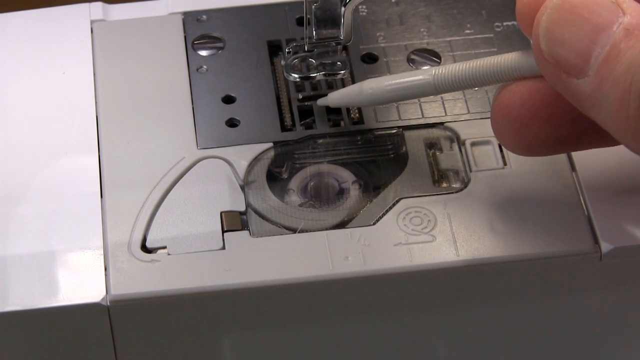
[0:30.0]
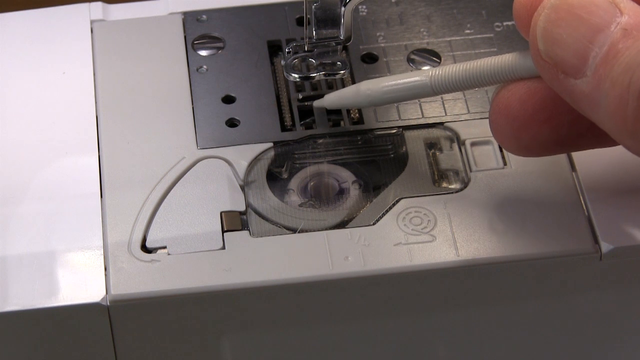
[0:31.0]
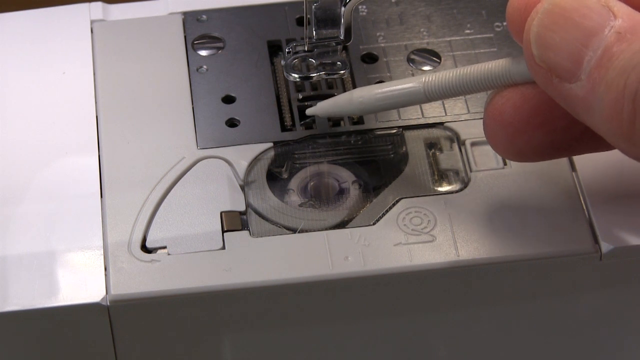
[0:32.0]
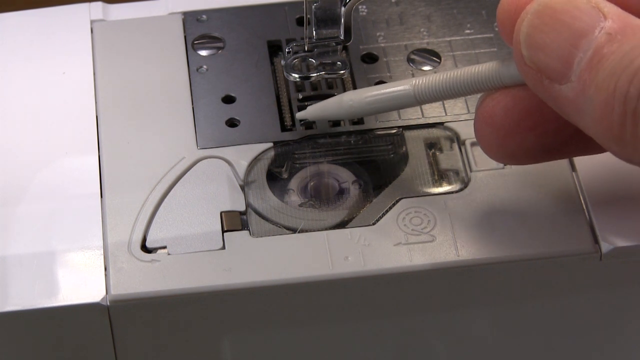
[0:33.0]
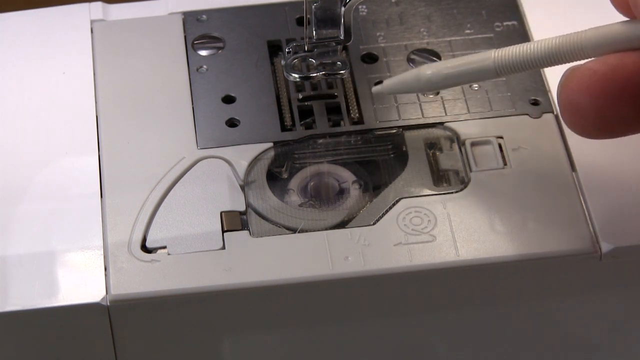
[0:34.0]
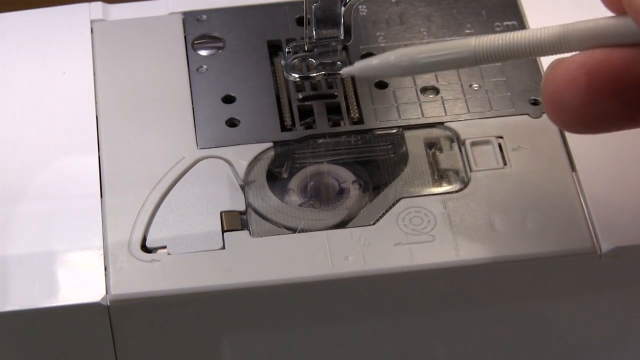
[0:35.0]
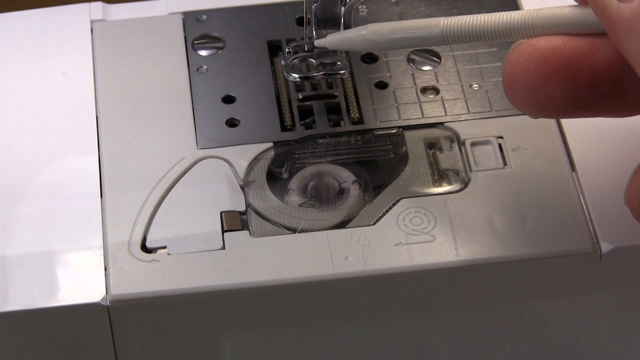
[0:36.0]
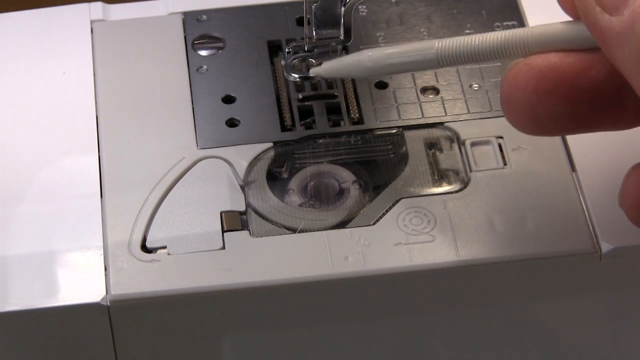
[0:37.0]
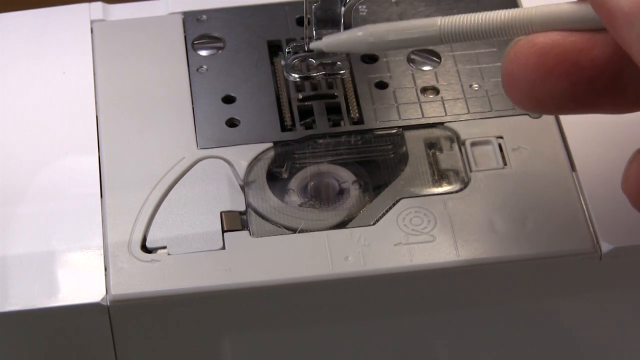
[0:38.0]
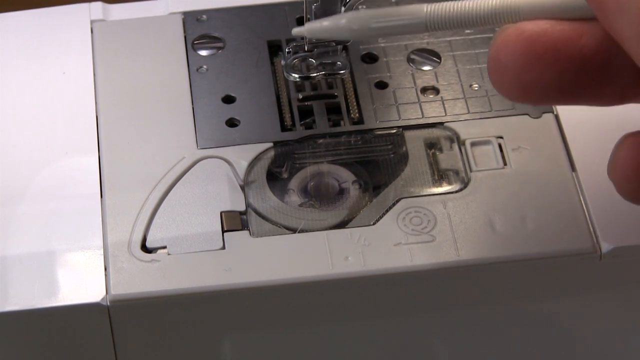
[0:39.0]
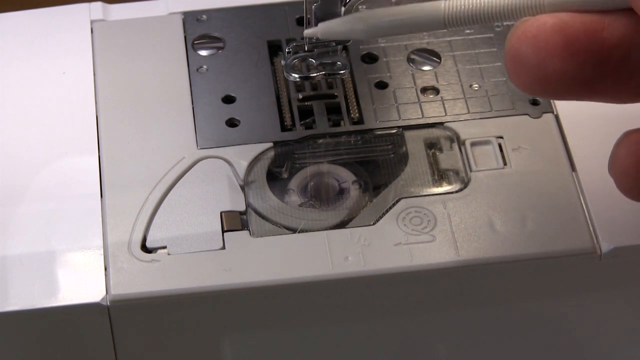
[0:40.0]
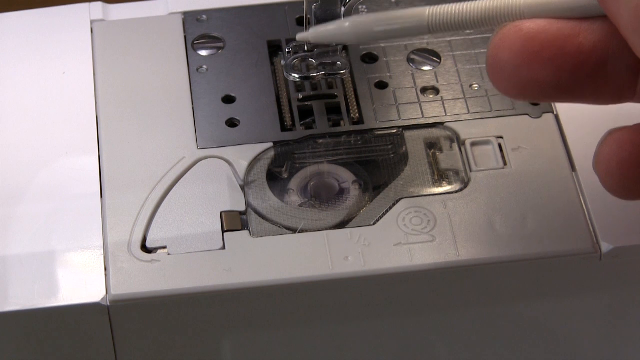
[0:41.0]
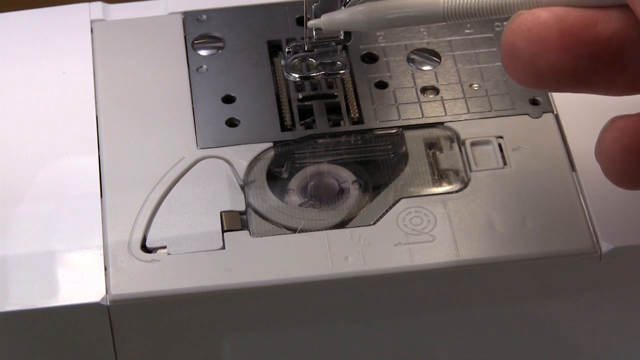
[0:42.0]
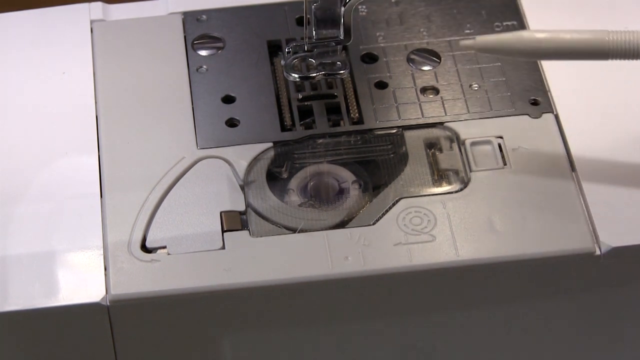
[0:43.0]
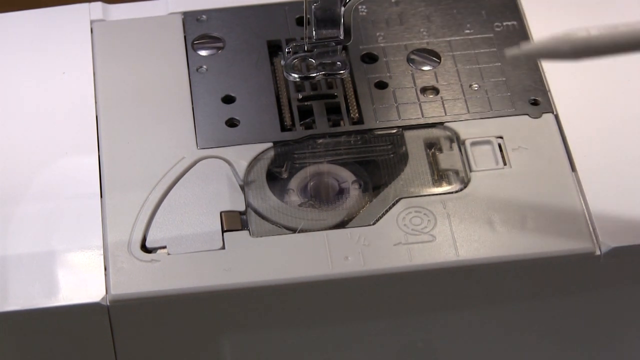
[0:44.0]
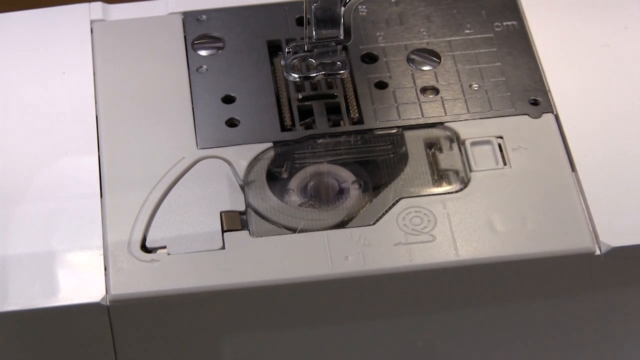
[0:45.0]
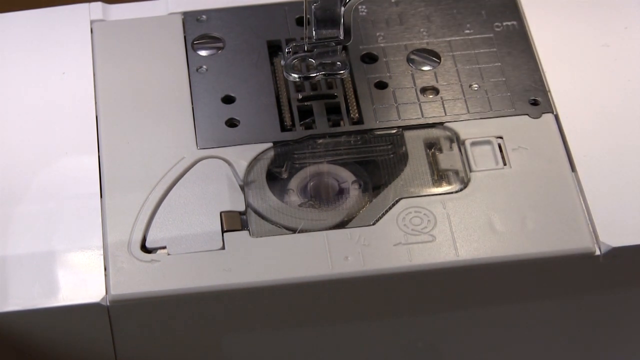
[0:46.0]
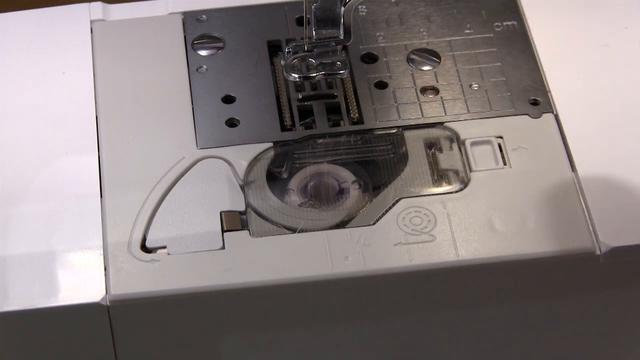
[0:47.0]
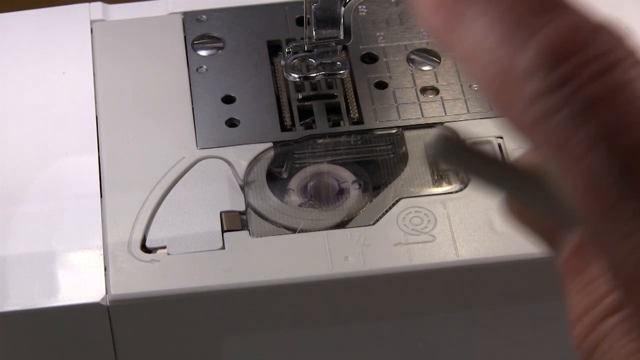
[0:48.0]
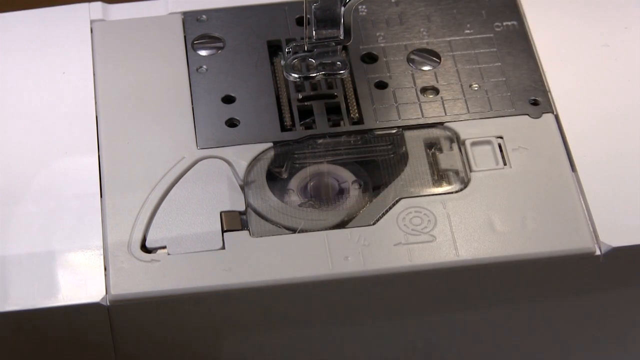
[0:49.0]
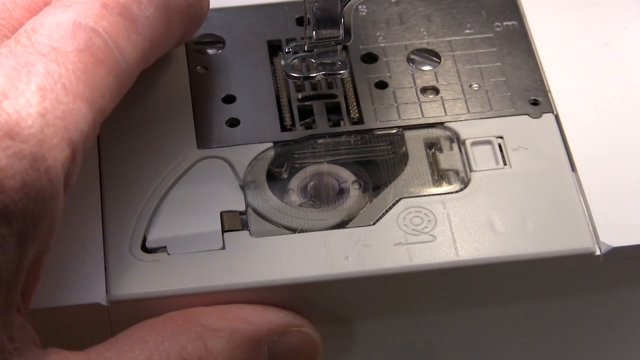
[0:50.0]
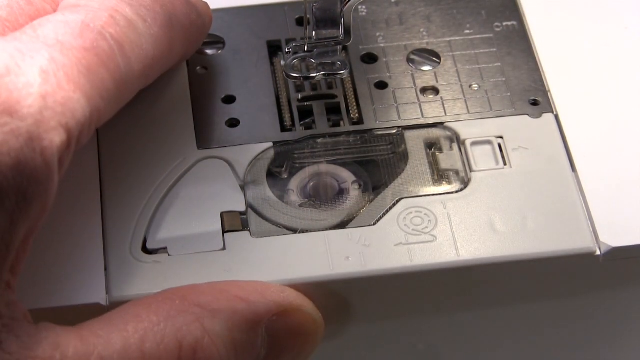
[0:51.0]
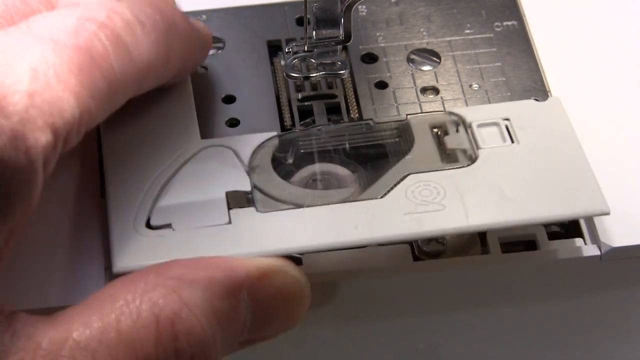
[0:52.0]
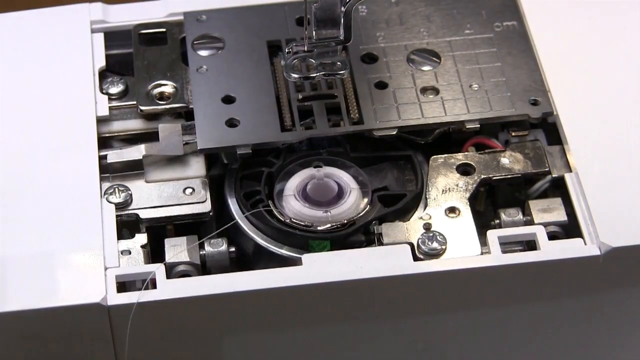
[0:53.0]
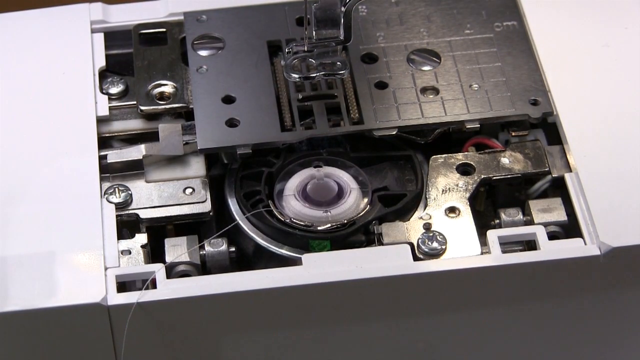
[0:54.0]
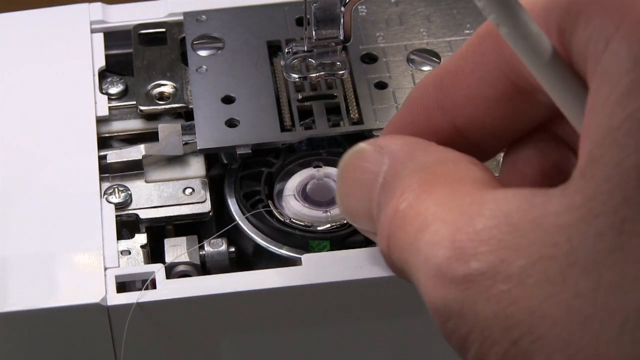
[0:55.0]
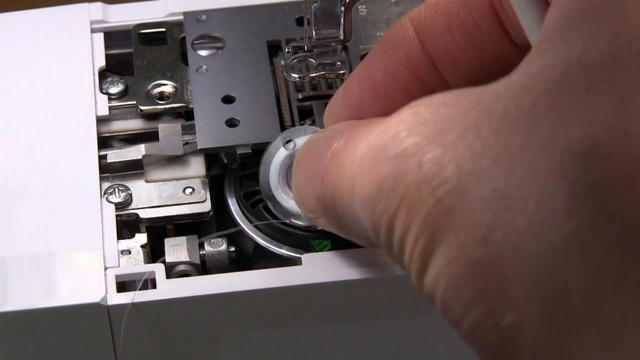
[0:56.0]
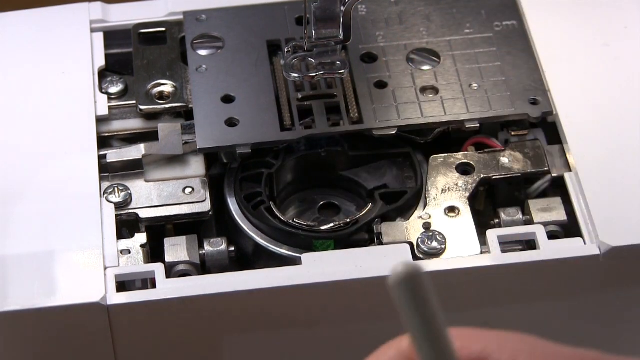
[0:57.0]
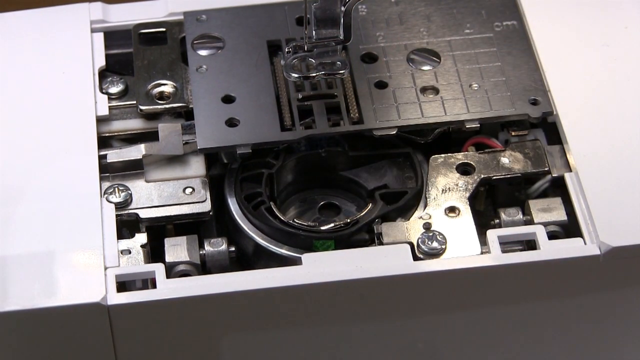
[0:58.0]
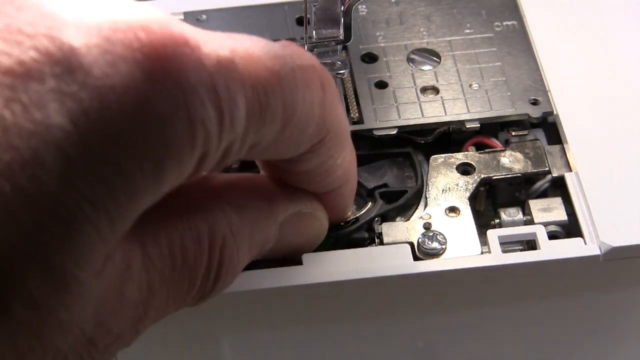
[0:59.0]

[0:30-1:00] The bottom part of the sewing machine is in view, with its different parts: a metal plate with some holes and some screws, the system on top where the needle goes into the hole, and the bobbin piece. The man, who has short nails, holds the pencil-like object in his hand and first points at the top part where the needle goes through a hole, touching most of it with the pencil. He then moves his right hand out of the camera's view, and with his left hand takes out a plastic piece, revealing the bobbin with thread on it. He takes the bobbin out as well, then removes another plastic piece from inside, leaving the machine quite disassembled.